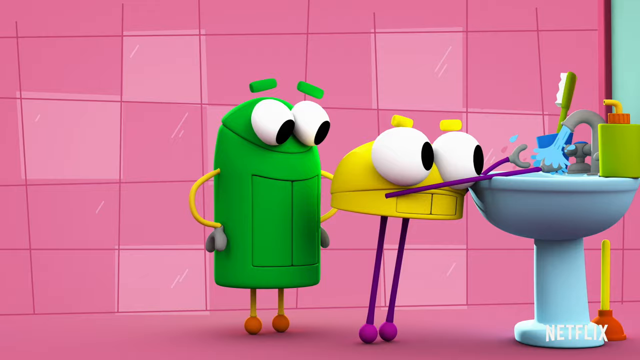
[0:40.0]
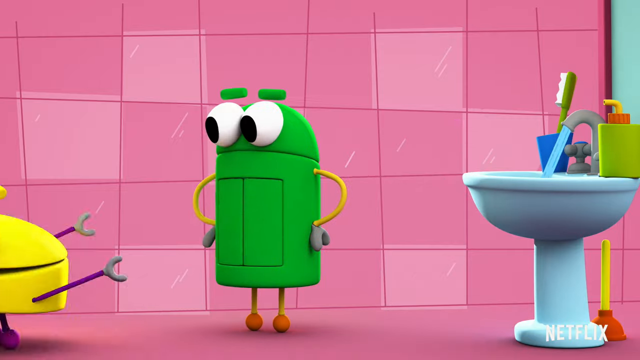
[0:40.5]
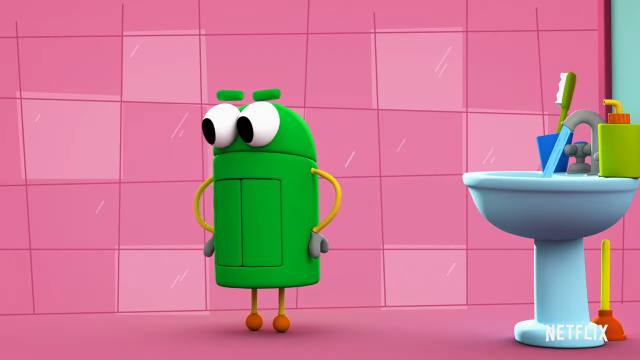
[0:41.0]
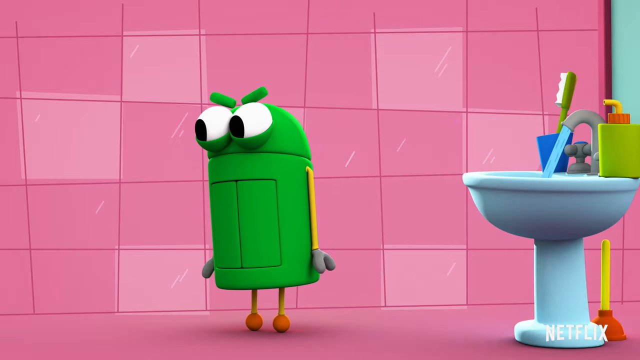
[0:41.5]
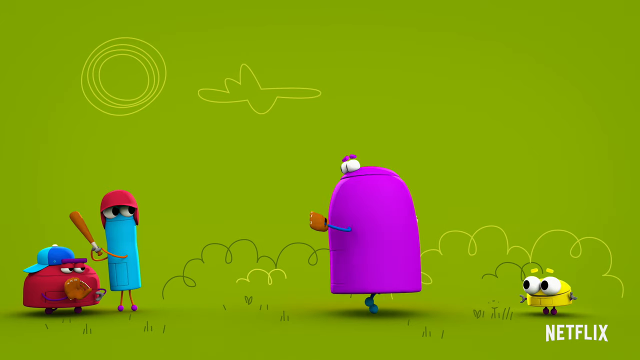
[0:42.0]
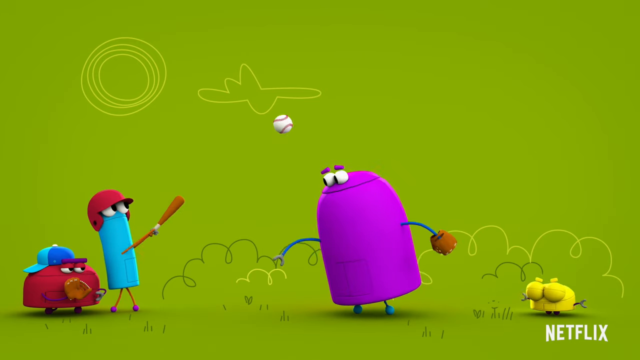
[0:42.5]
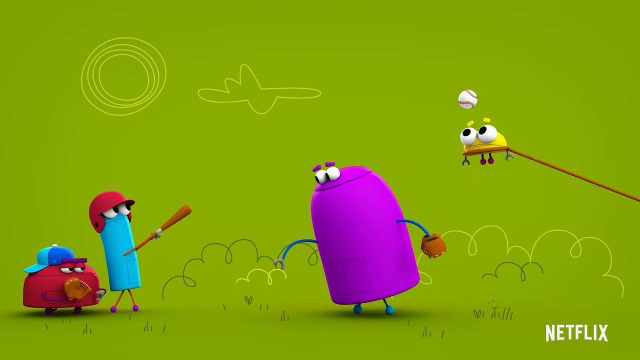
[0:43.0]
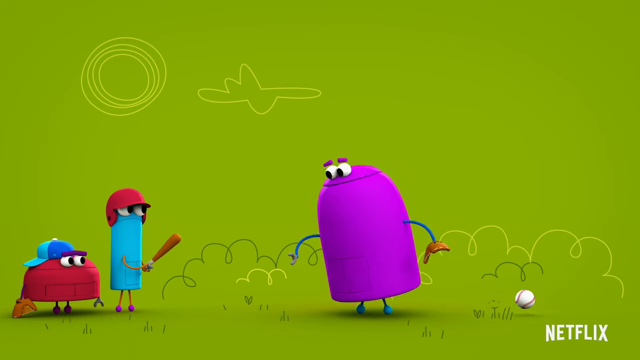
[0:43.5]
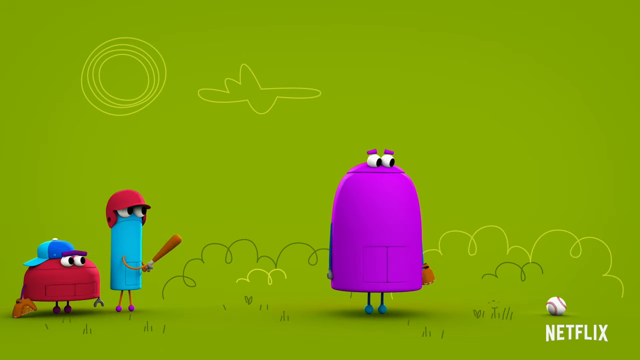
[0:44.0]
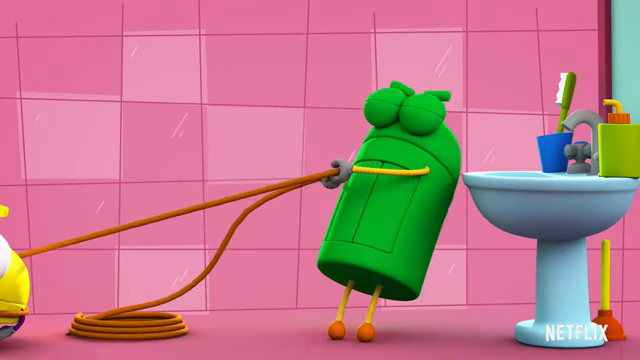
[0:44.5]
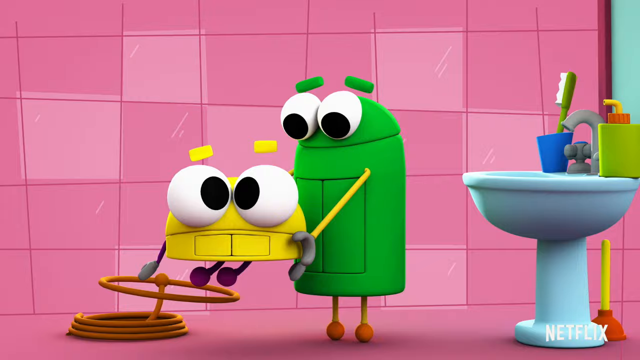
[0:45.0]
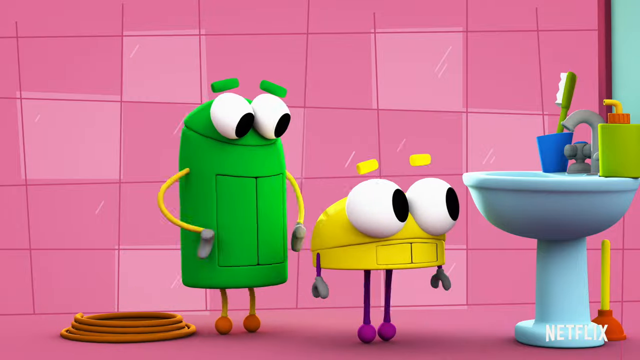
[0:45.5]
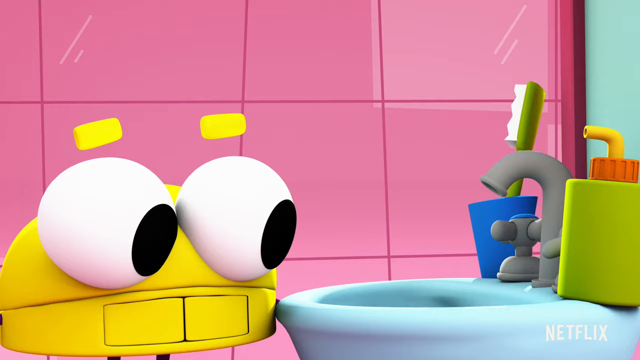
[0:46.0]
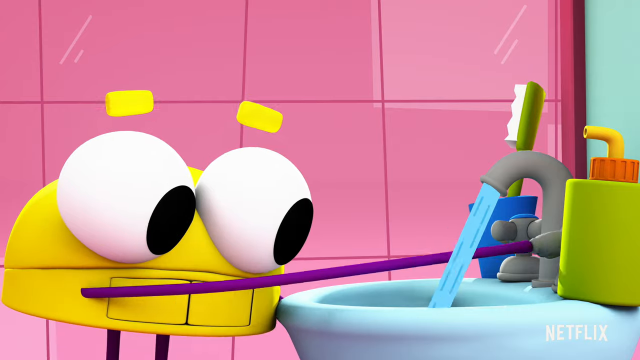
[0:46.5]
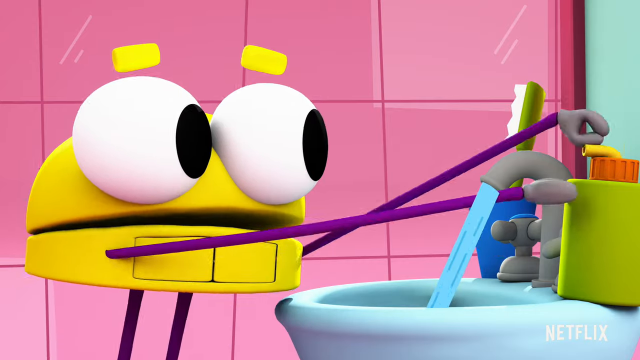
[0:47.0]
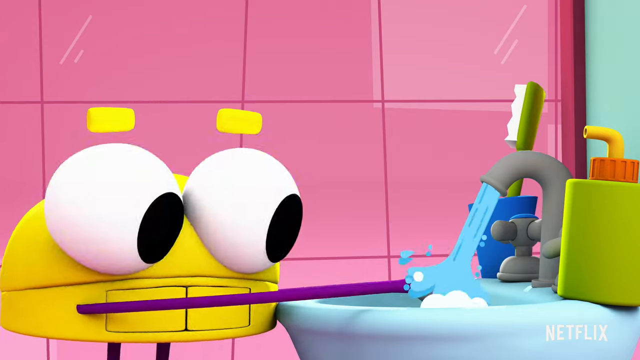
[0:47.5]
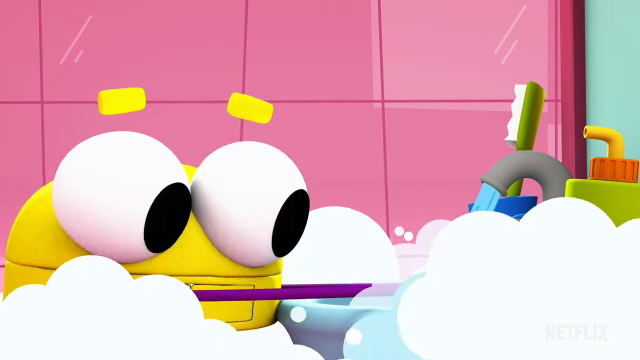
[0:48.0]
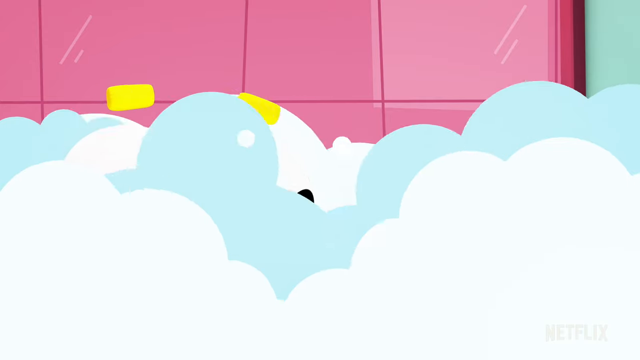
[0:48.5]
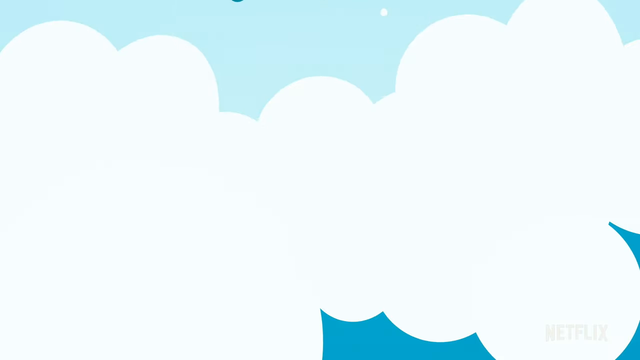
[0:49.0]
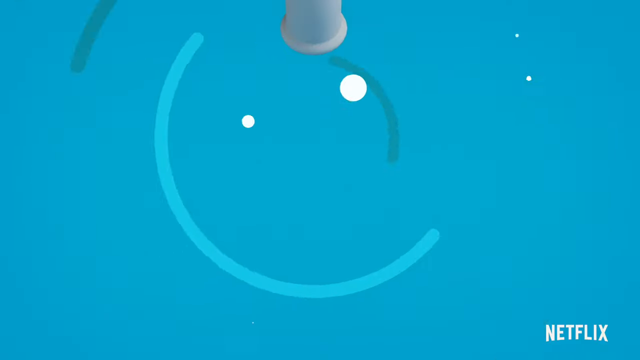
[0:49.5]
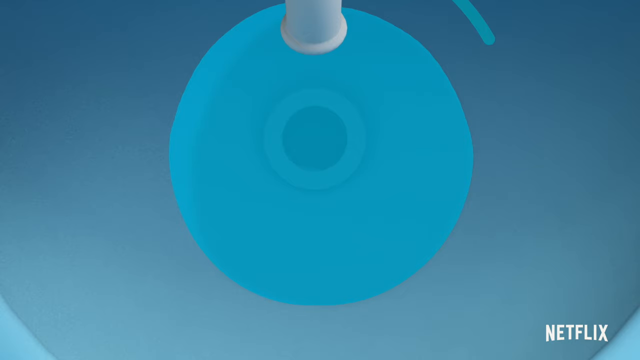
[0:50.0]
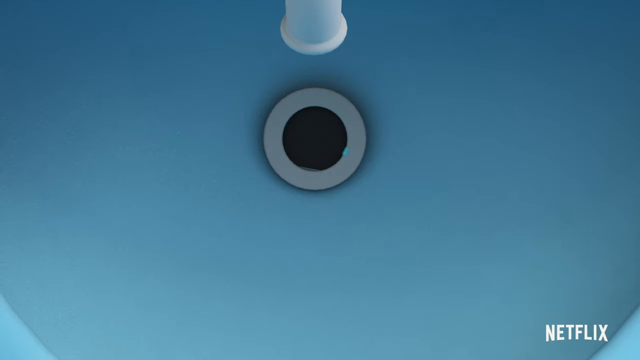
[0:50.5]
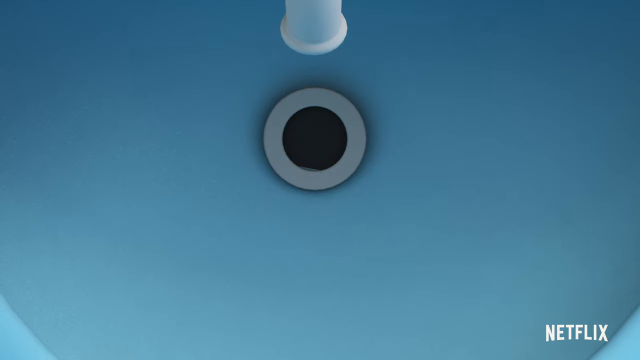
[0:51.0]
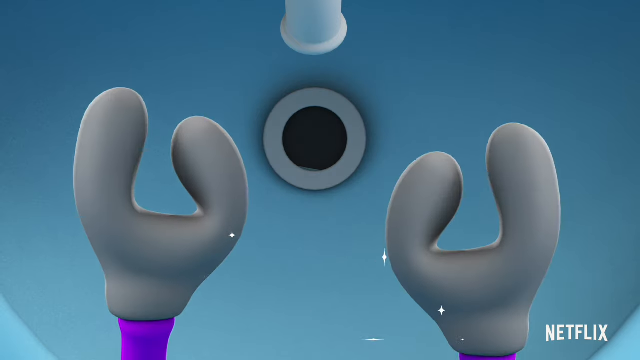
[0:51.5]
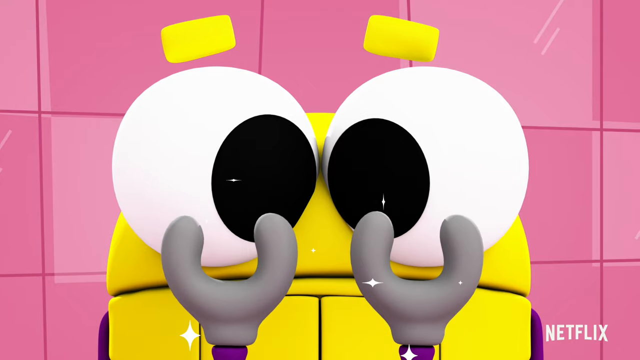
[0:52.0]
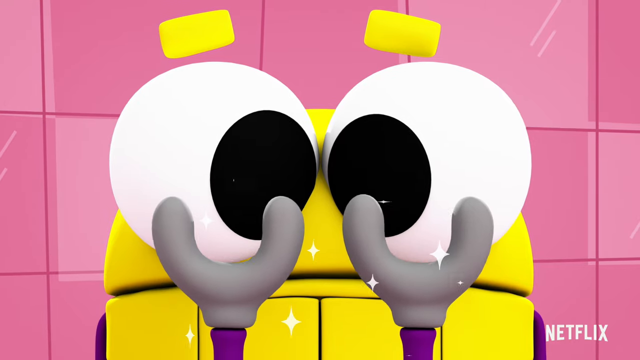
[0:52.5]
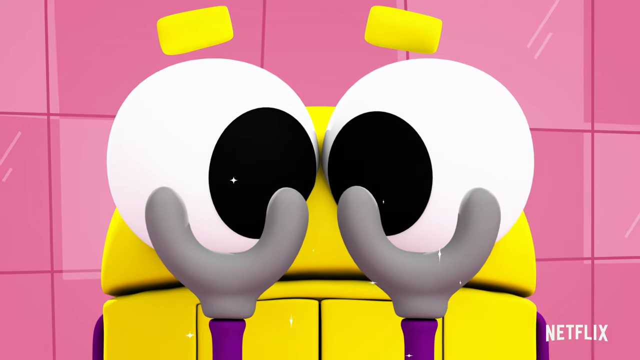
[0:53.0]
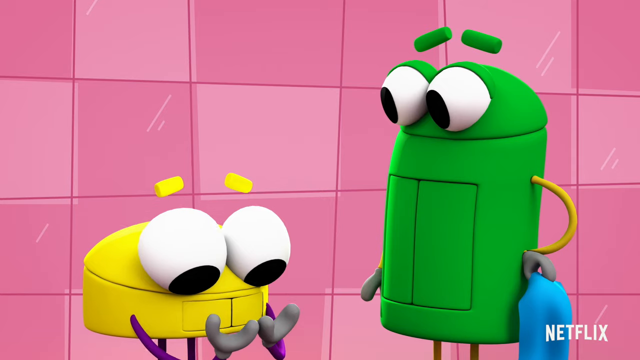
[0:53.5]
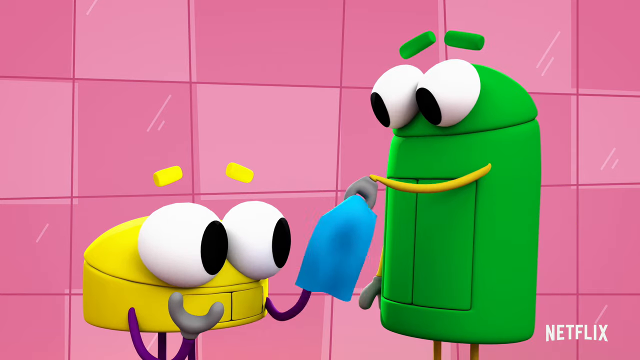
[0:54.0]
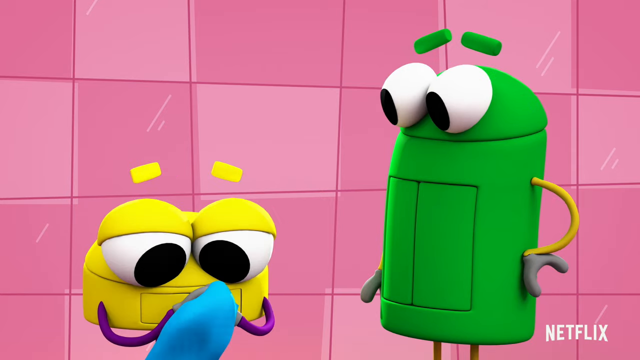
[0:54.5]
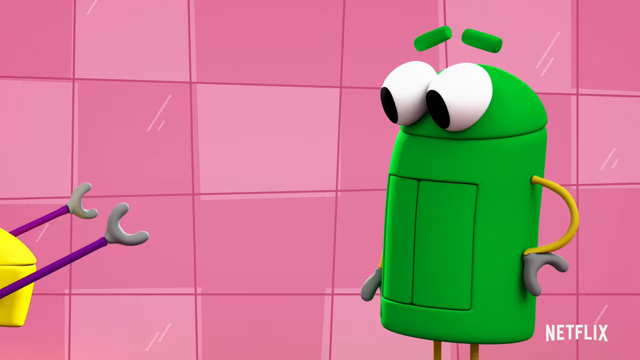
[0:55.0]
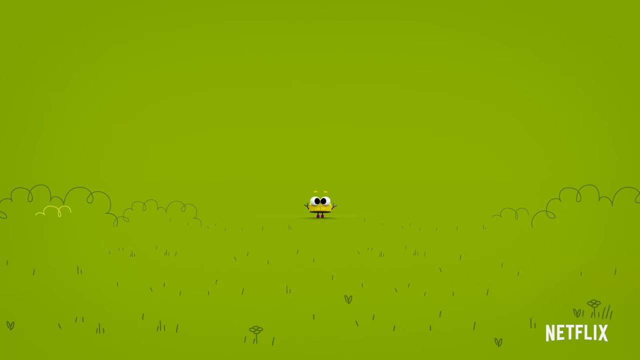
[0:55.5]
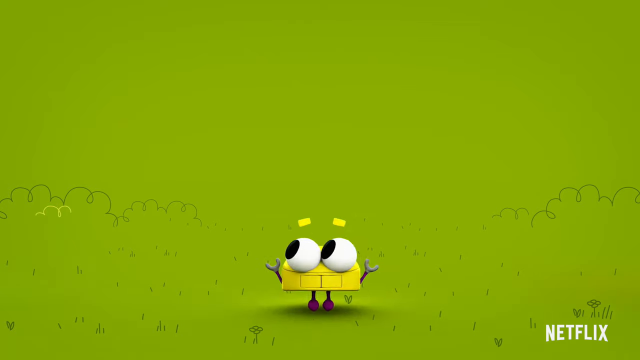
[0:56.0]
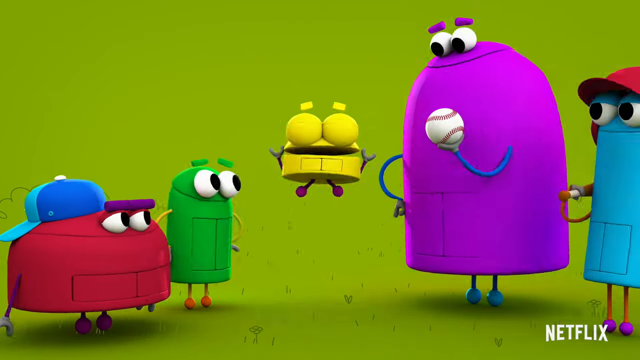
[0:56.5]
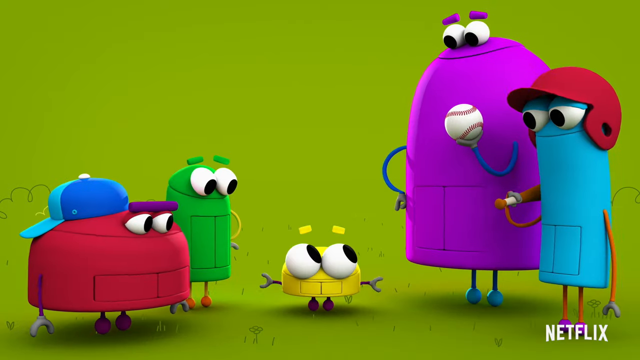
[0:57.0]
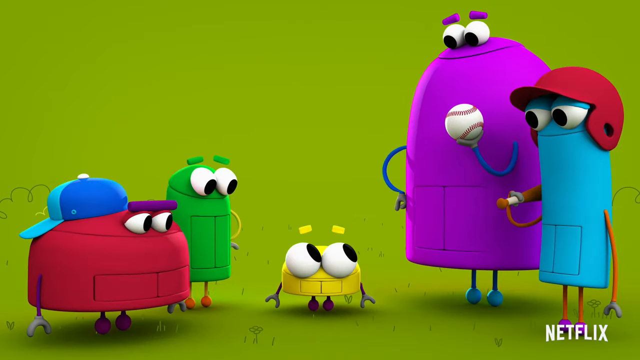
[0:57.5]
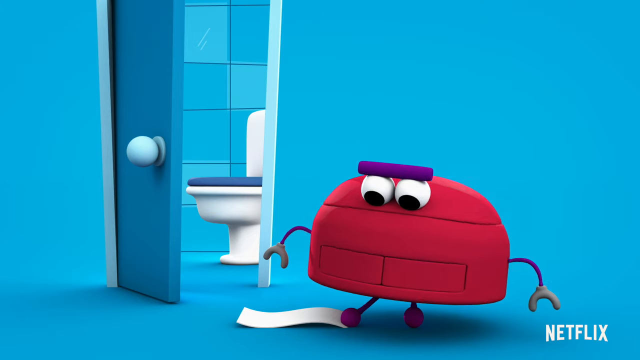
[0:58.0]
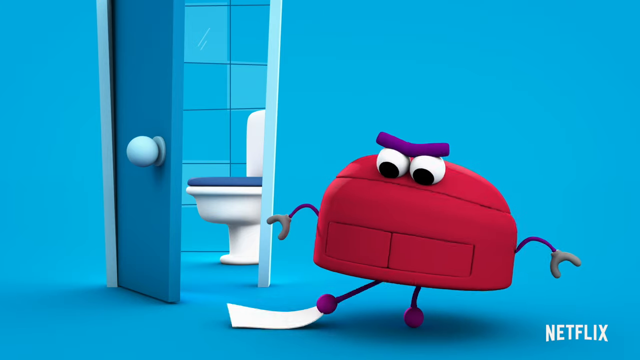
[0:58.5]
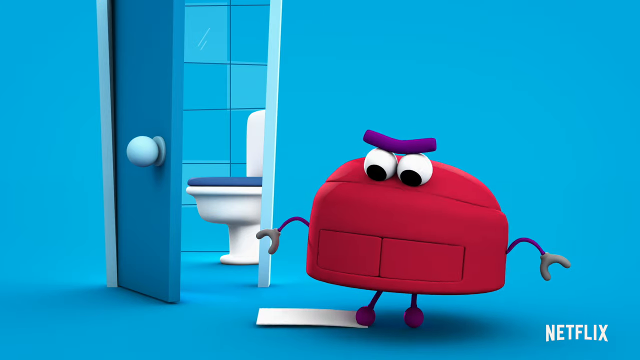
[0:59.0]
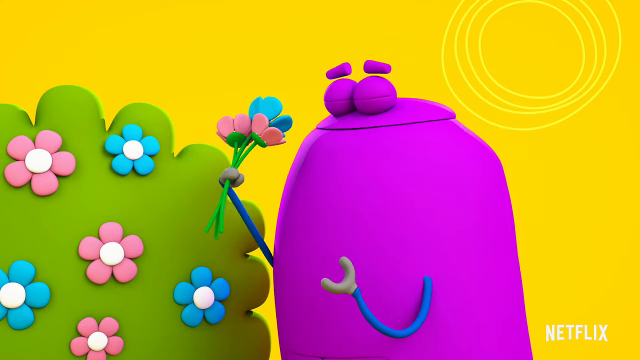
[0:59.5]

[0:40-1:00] The yellow creature frantically washes his hands very quickly, then leaves the faucet on and runs out of the room while the green one frowns at him. The red, blue and purple creatures are shown playing baseball together. The yellow one comes in from the right, and as the blue one hits the ball into the air, the yellow one jumps up to try to catch it, but mid-jump he is pulled in by a lasso from off-screen; the other creatures kind of look in his direction as he is tugged off-screen. Back in the bathroom, the green creature reels the yellow one in, places him right in front of the sink again, and puts his hands on his hips. The yellow one turns the faucet on again, the water starts going, soap starts pumping, and suddenly the whole room starts filling with soap. An aerial shot then shows water all getting flushed down the drain, followed by the creature's hands, which are sparkling. The view cuts to the creature's face as he holds his hands in front of it, kind of looking in awe at how sparkly they are. Next, the yellow one is on the left and the green one on the right; the green one looks pretty satisfied and hands the yellow one a blue hand towel. He dries his hands and runs back to the lime-green background, coming in from the center toward the viewer until he is in the middle. From the left and right, all the creatures come in and surround him in their original positions: the red one on the left, the green one, the yellow one in the middle, then the purple one and the blue one. The yellow one kind of just puts his hands down. It then cuts to a blue bathroom with a blue open door, where the red one is in front of the open door with toilet paper attached to his feet, looking kind of grumpy and shaking his foot. It cuts to a yellow background with a bush of pink and blue flowers in the bottom right corner, where the purple creature is kind of just sniffing the flowers.